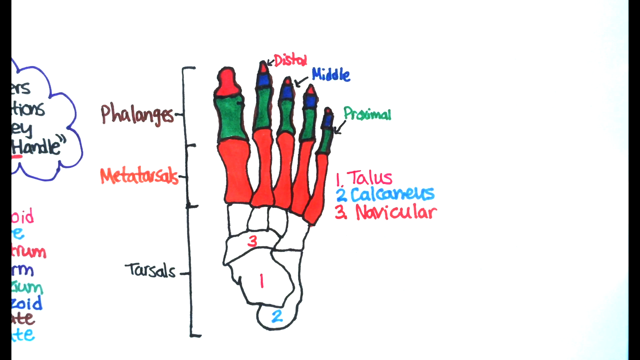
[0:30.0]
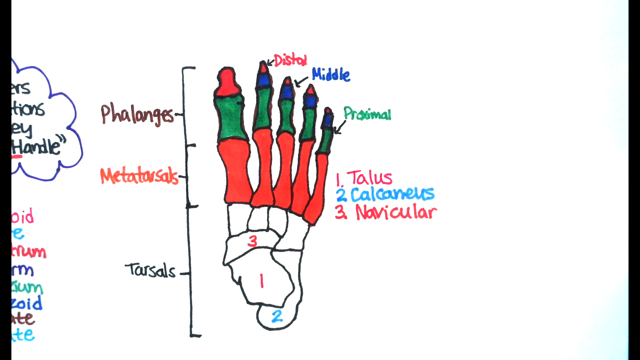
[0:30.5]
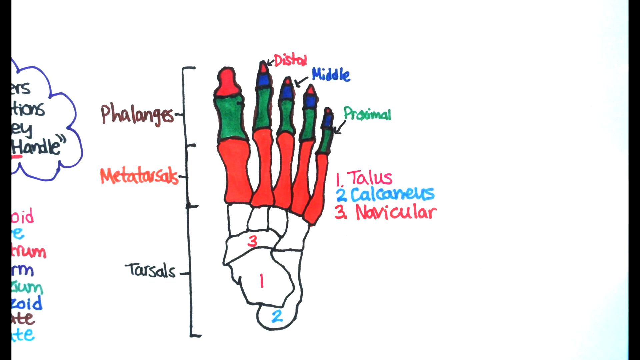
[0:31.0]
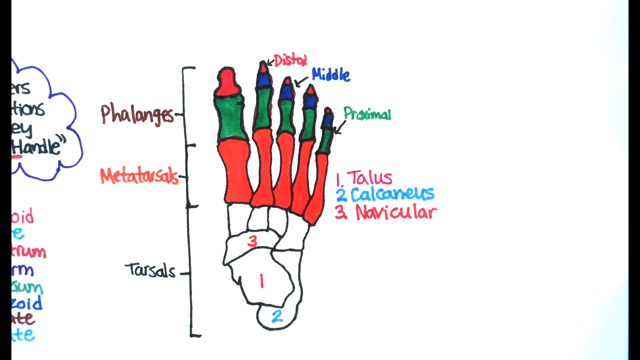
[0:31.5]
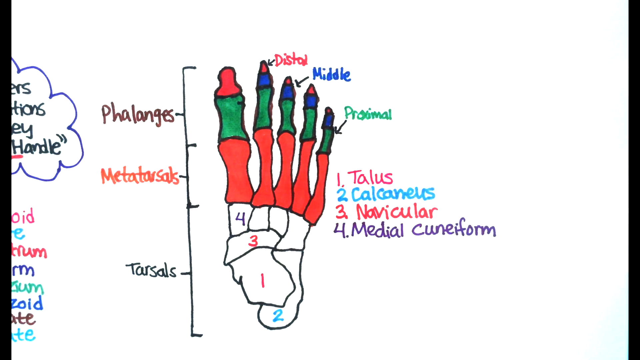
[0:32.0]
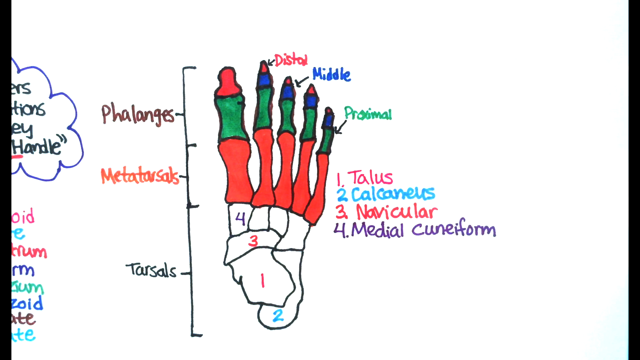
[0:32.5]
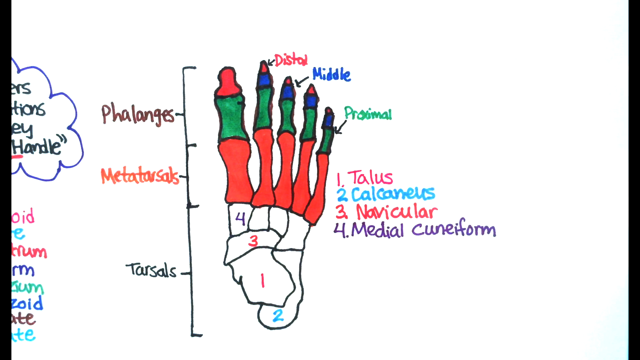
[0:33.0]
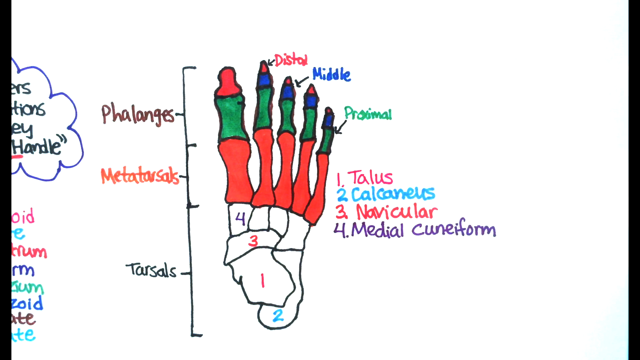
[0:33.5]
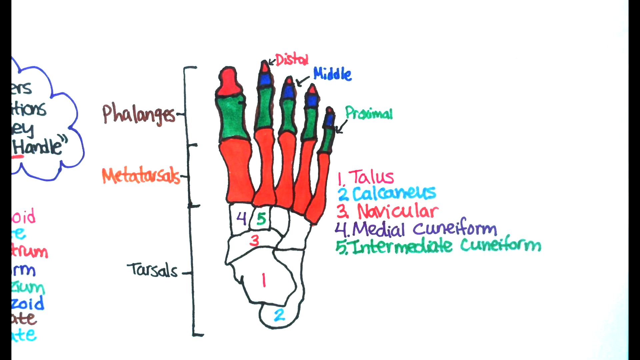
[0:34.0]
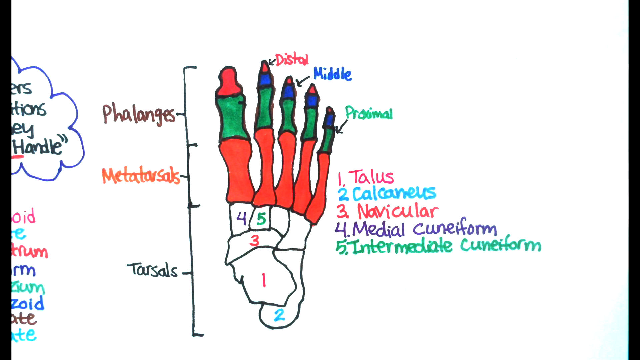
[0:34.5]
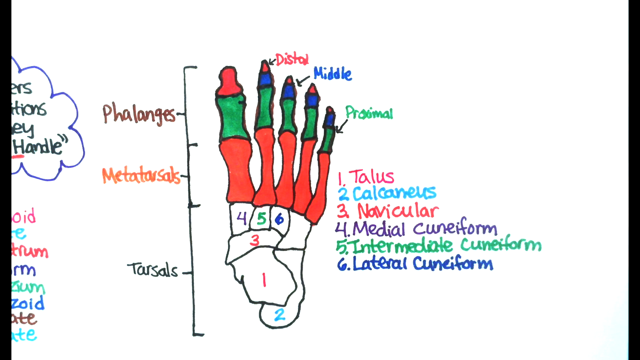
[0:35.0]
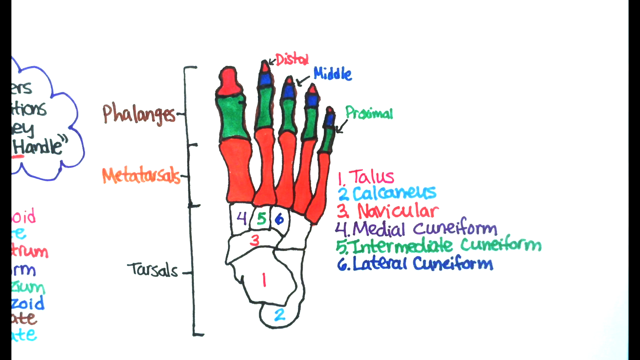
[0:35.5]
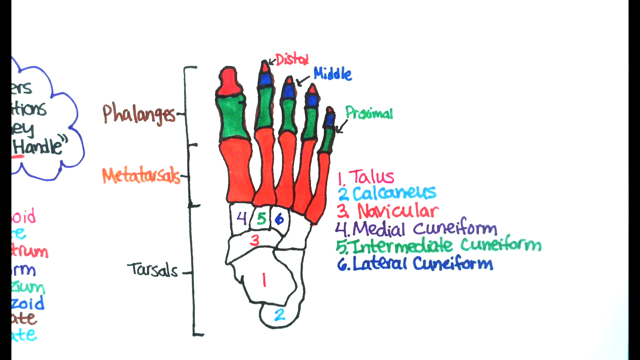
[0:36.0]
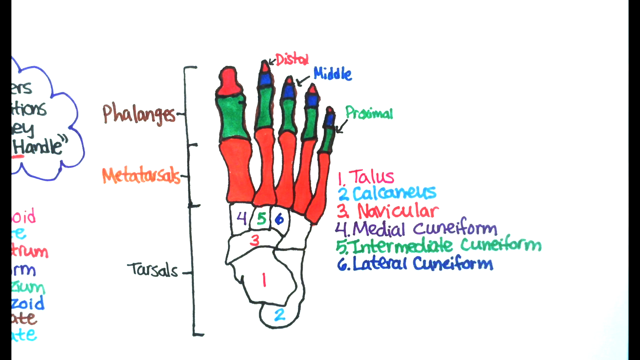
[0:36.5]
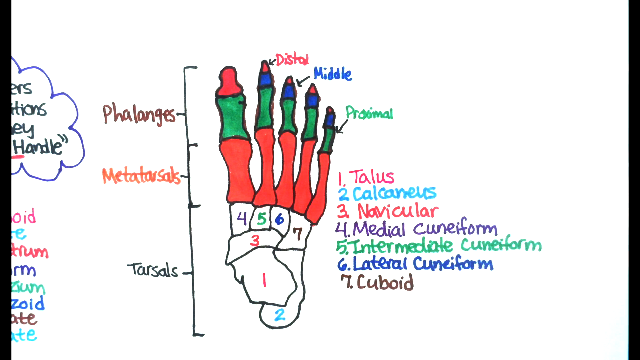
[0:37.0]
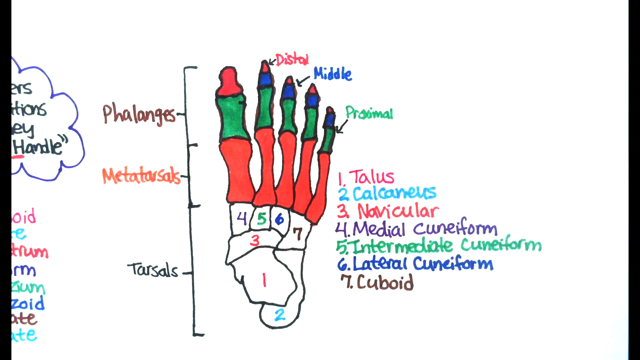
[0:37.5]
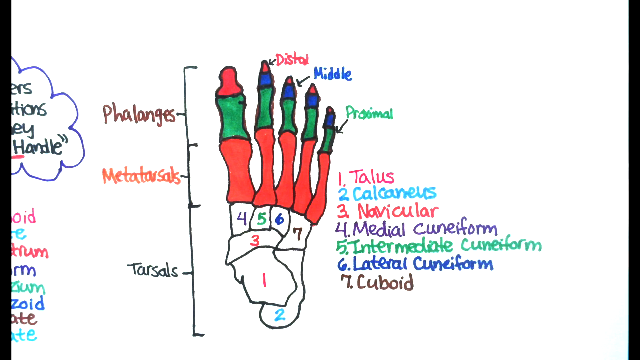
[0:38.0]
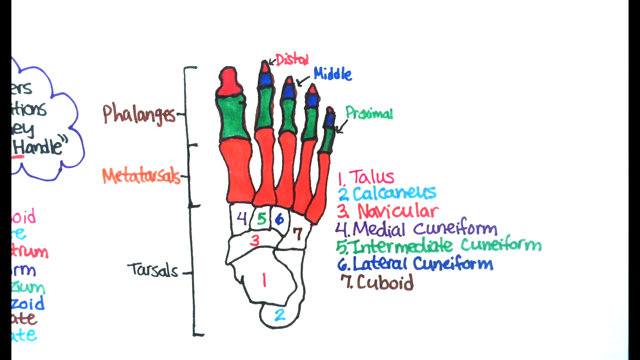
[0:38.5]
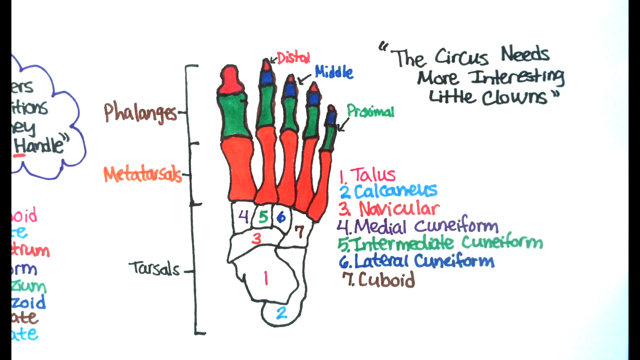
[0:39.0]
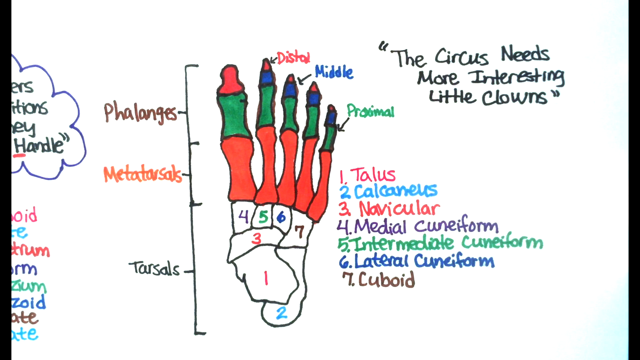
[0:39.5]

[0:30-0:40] Words and numbers continue to appear on the diagram. Numbers 4, 5, 6 and 7 appear on the screen one by one in consecutive order. Each number has a different piece of bone labeled beside it, and each is in a different color from the others. Then, at the top right of the screen, the quote "The circus needs more interesting little clowns" appears.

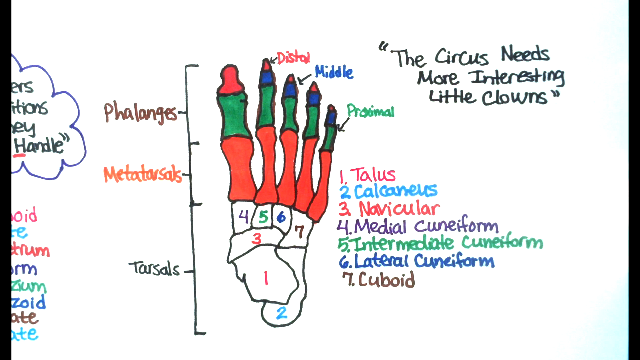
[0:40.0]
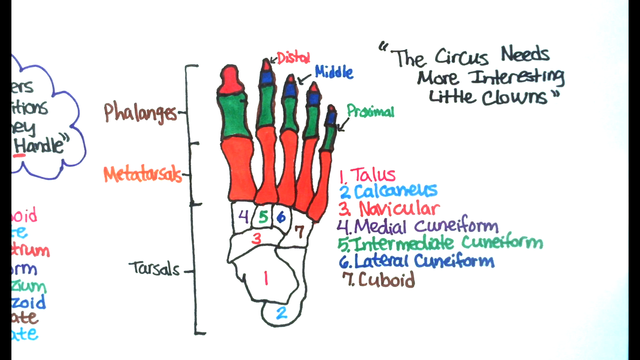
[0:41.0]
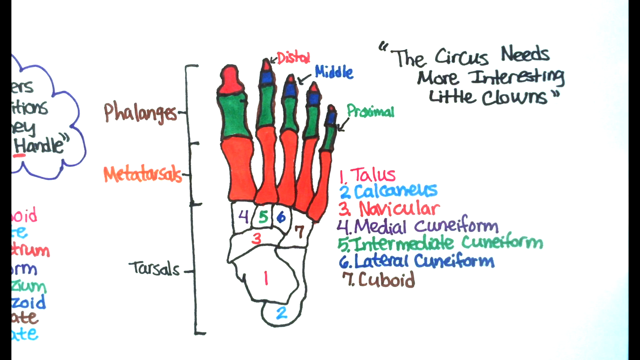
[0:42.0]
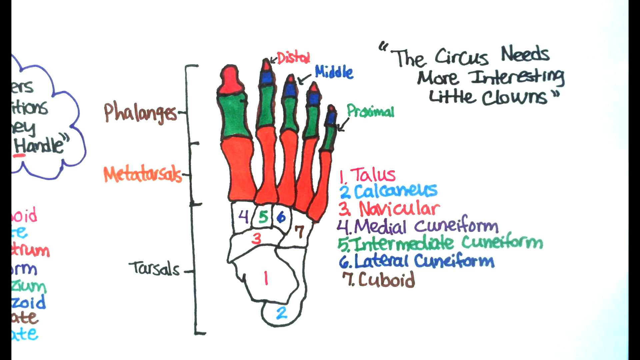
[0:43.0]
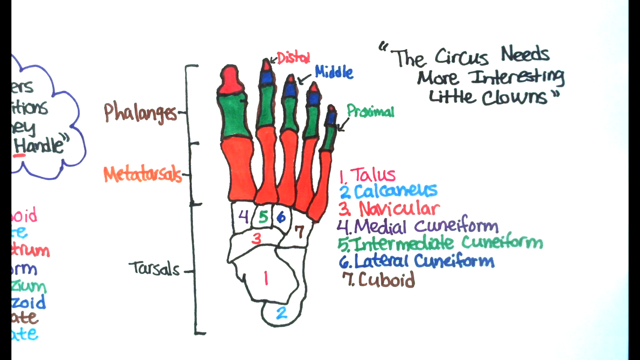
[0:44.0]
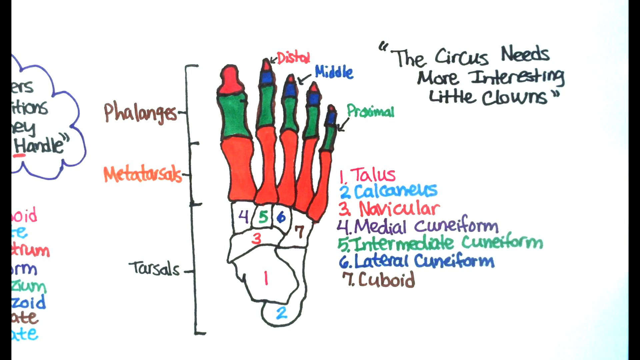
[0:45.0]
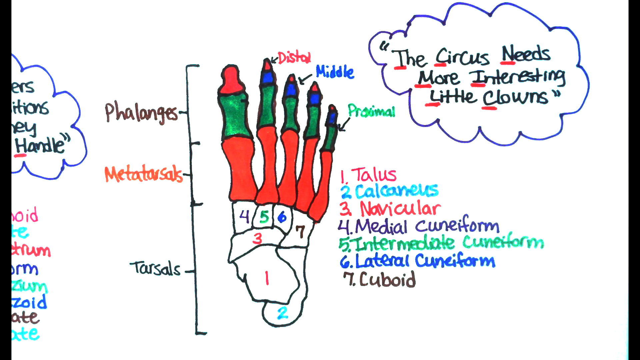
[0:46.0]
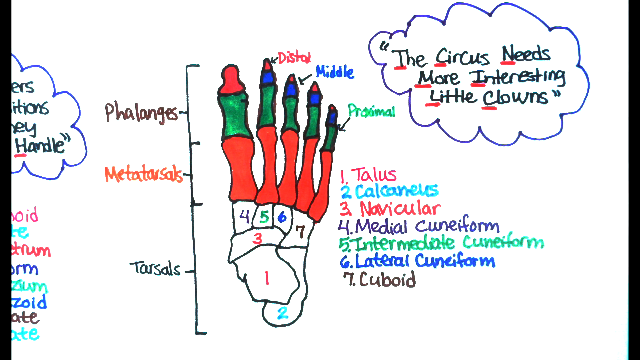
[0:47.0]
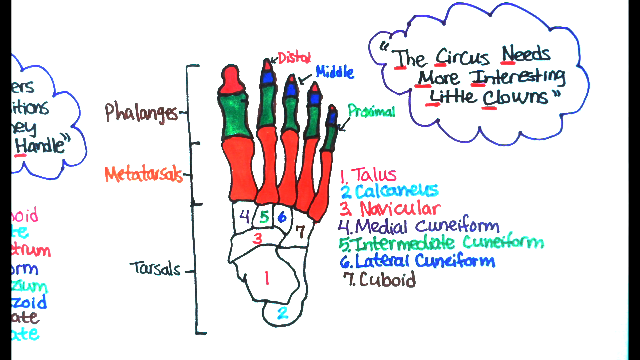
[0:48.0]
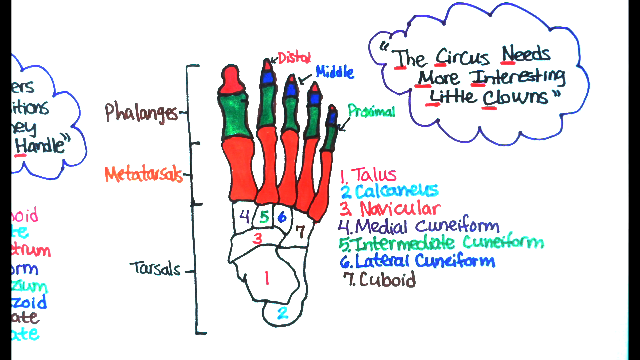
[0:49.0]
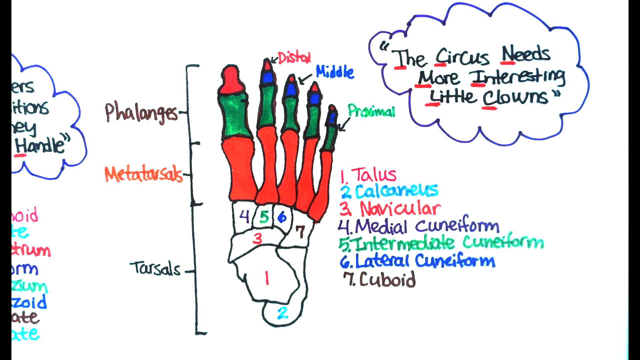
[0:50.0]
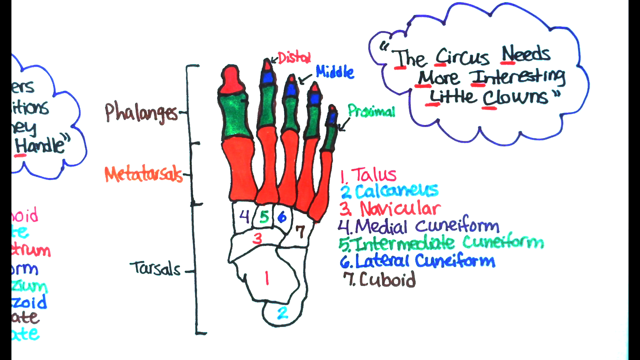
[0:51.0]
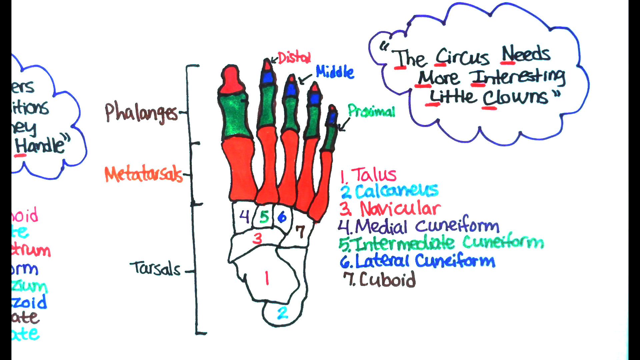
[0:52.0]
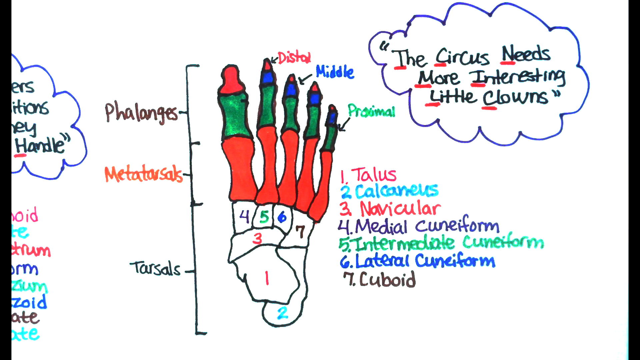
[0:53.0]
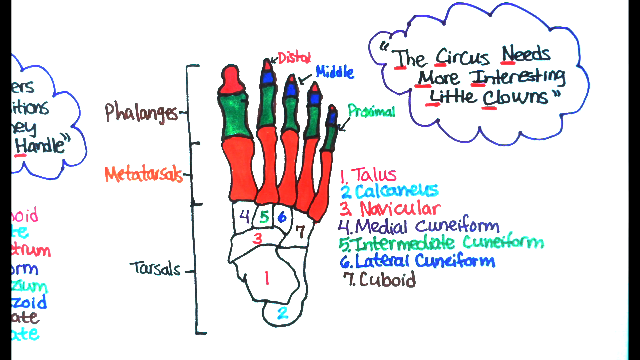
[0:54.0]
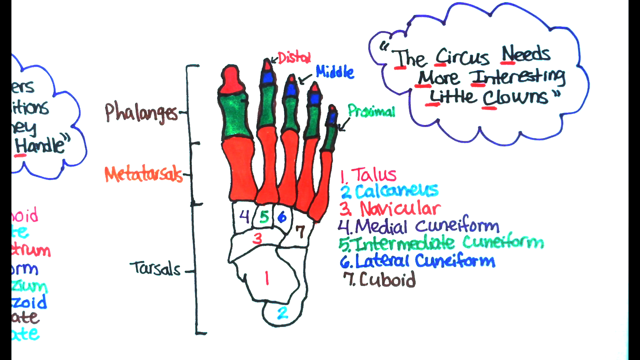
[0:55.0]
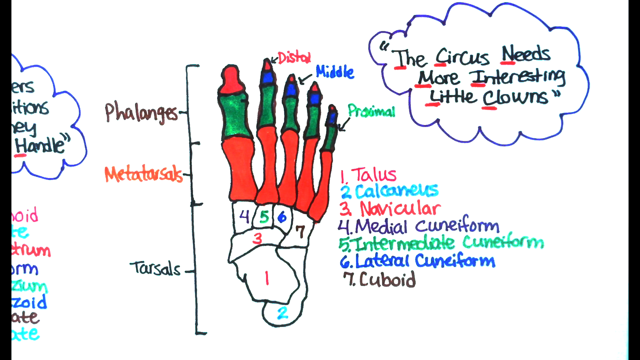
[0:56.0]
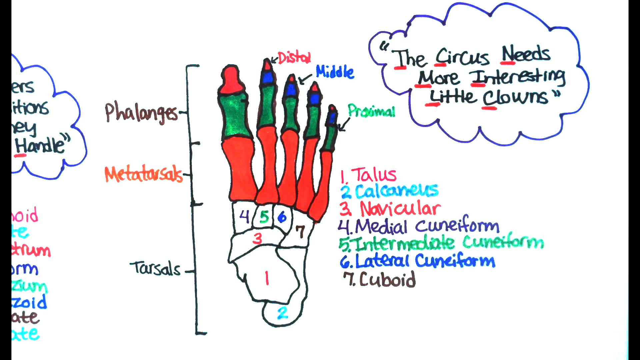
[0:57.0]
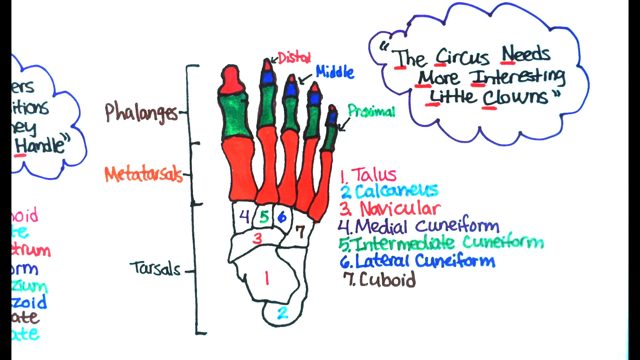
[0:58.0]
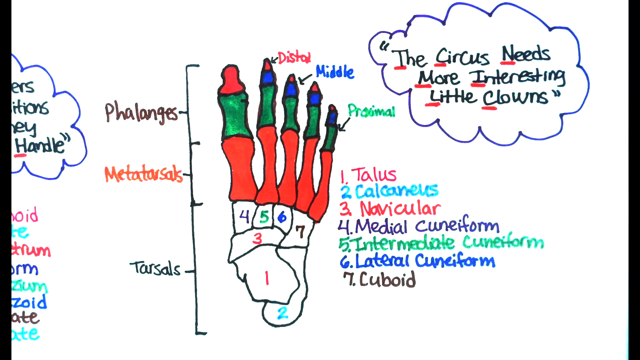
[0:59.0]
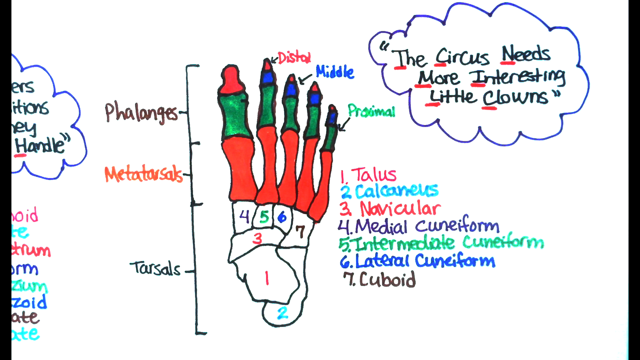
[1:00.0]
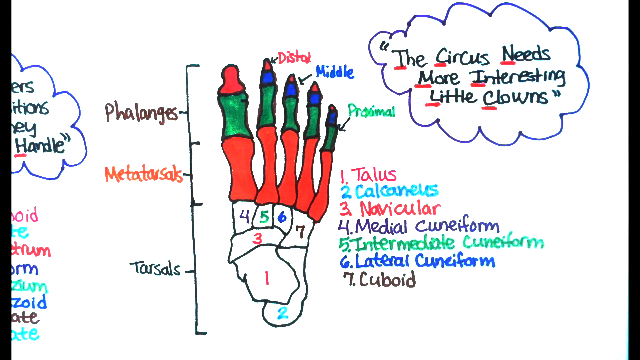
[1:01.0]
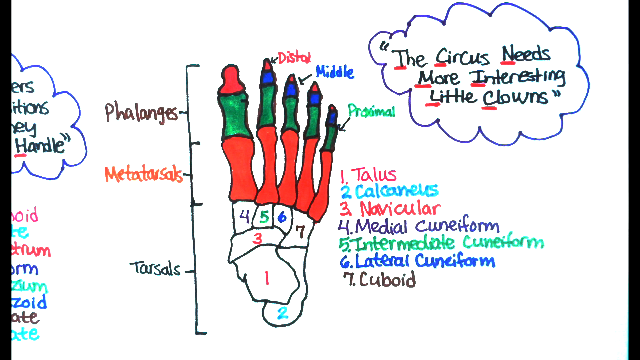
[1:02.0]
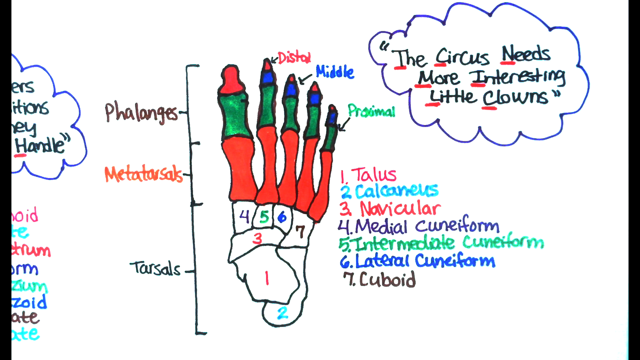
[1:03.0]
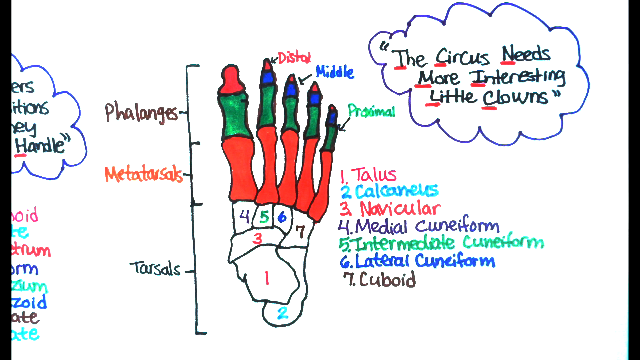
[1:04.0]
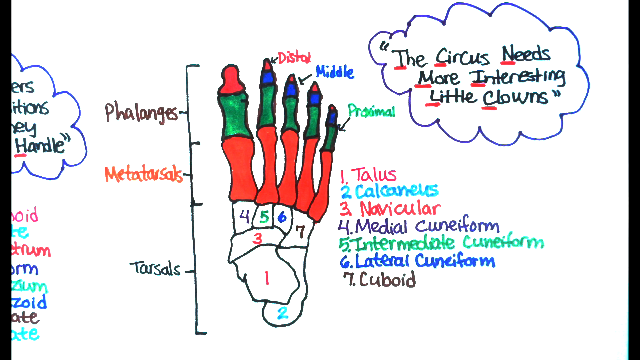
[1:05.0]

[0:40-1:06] The white screen with the diagram continues, and a speech bubble that looks like a cloud appears in blue marker around the quote, along with red underlines beneath the first letter of each word in the quote. After this, the entire diagram and labeled image seen at the beginning is visible, fully drawn in. In the middle of the screen is the bone with its labels. To the left of the bone, a line separates the top, middle and bottom areas, each with its name. The bone is colored in different colors, labels point at the different areas, and the bottom part of the bone carries the number system, labeled with the key legend to its right. The quote is in the top right. The diagram stays on the screen until the end.